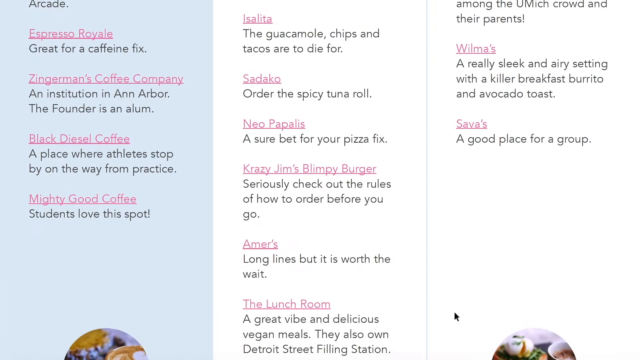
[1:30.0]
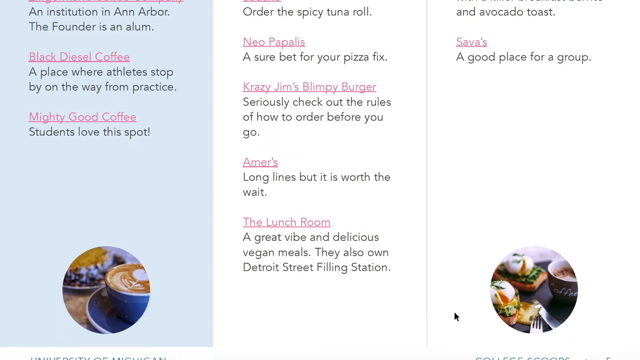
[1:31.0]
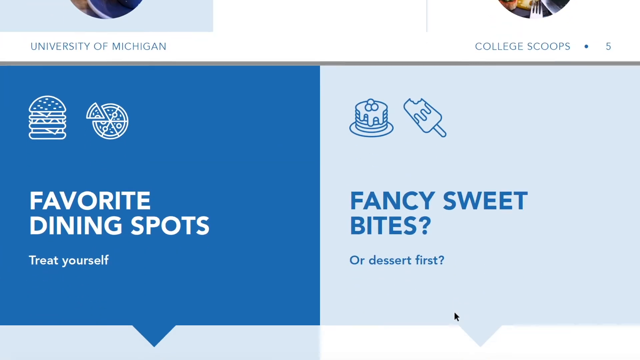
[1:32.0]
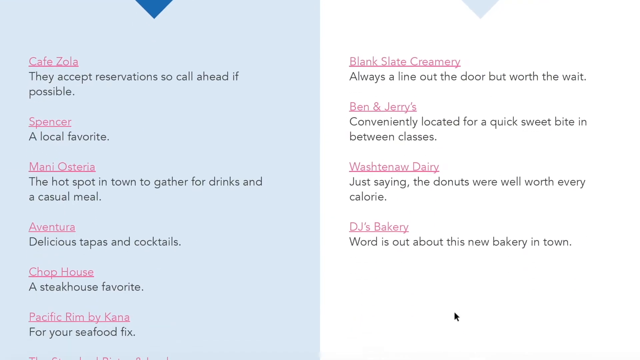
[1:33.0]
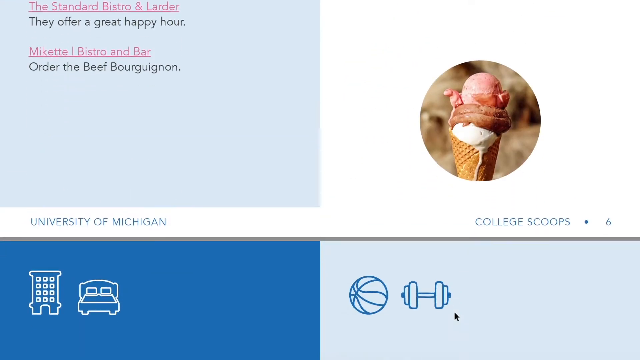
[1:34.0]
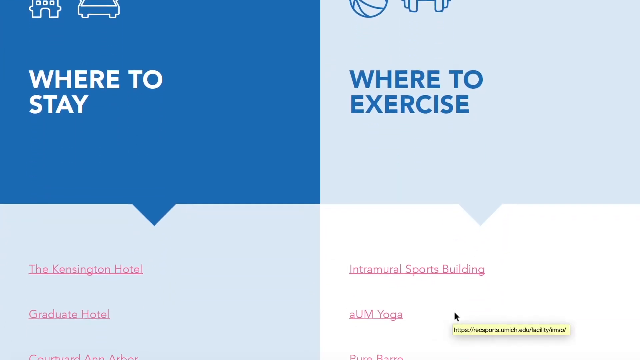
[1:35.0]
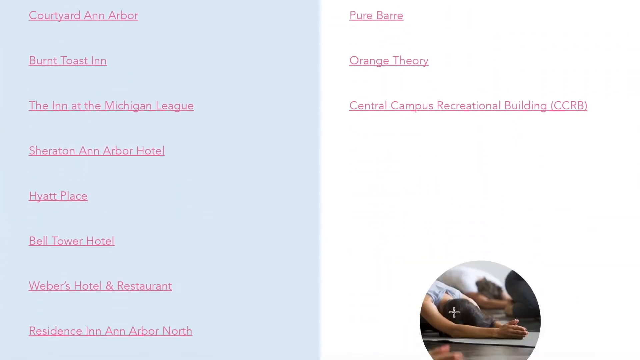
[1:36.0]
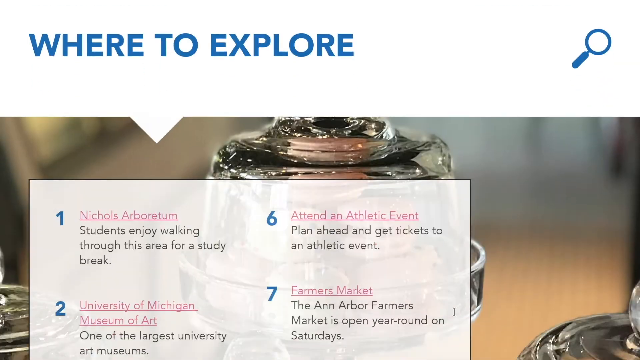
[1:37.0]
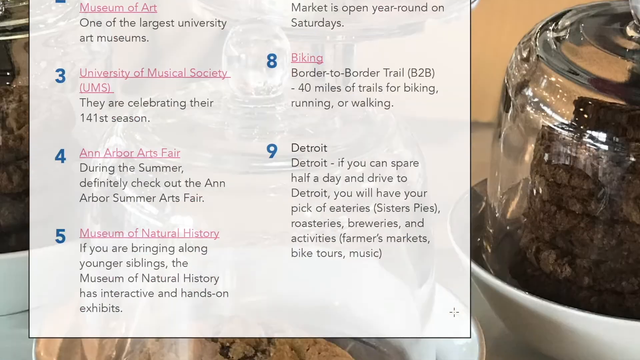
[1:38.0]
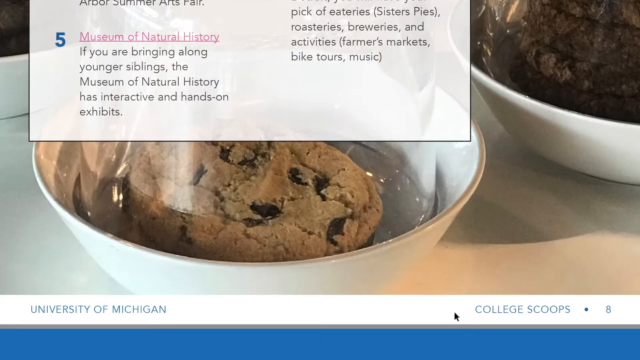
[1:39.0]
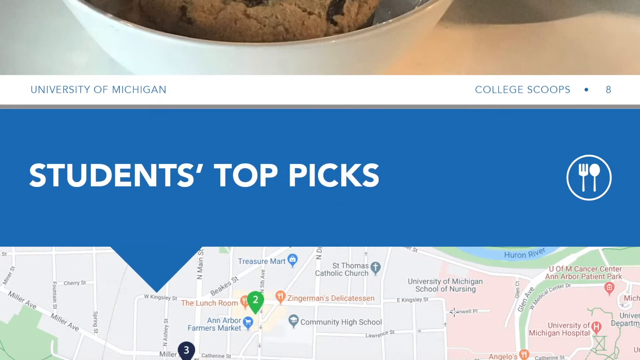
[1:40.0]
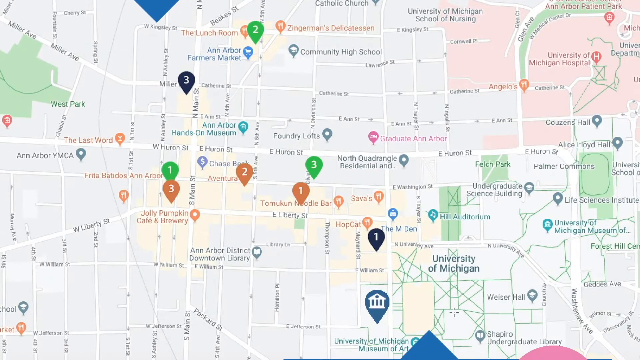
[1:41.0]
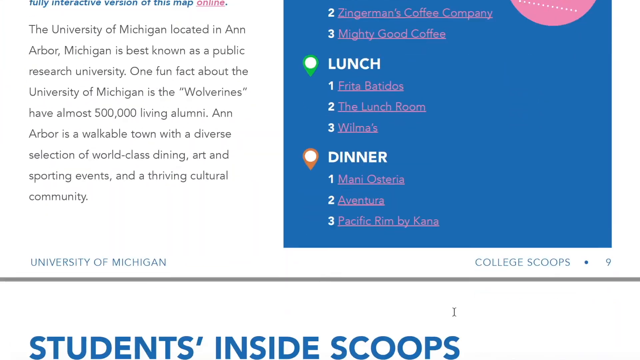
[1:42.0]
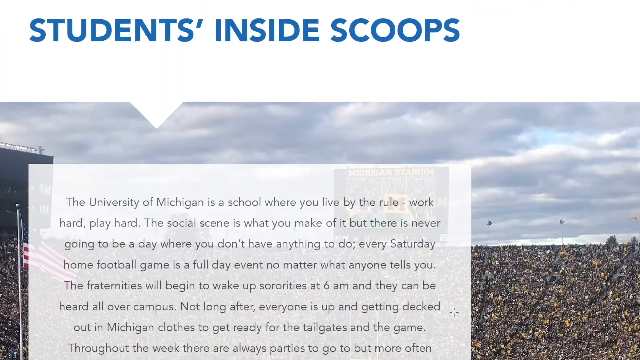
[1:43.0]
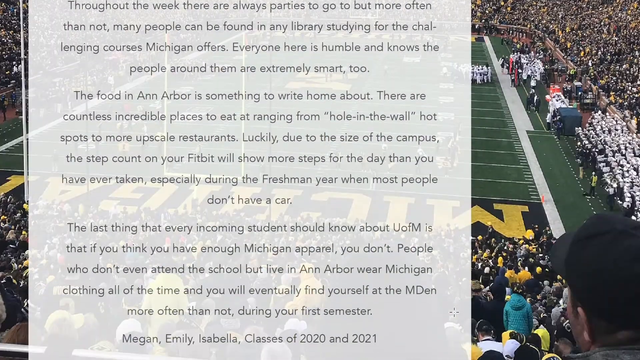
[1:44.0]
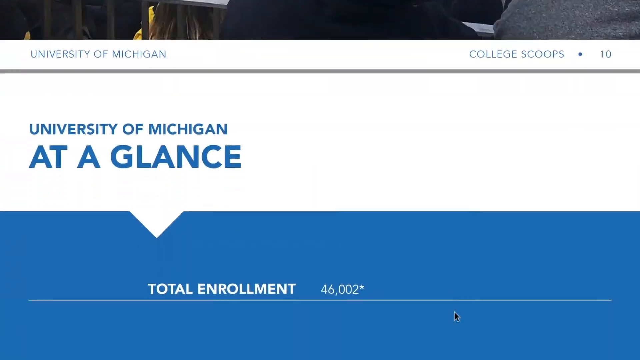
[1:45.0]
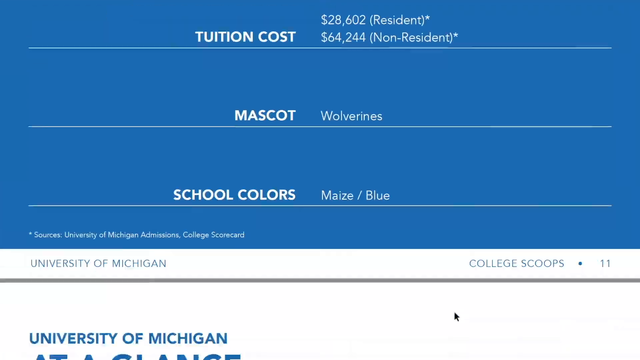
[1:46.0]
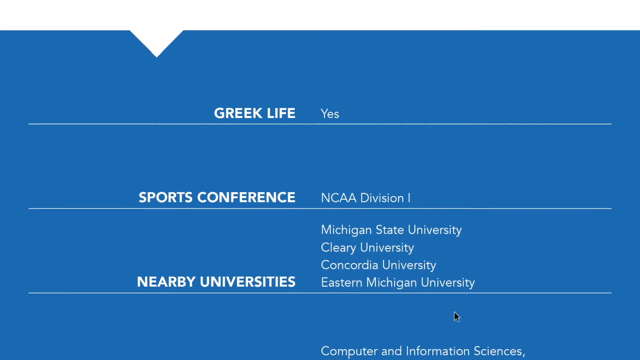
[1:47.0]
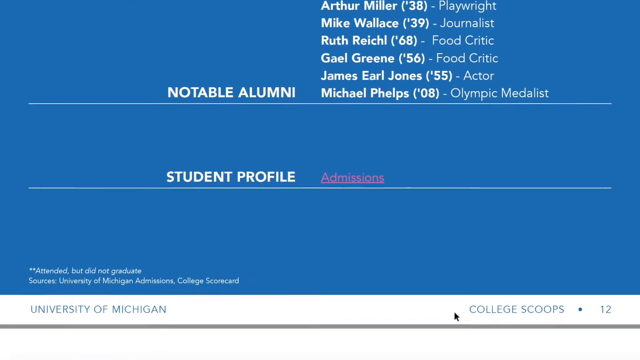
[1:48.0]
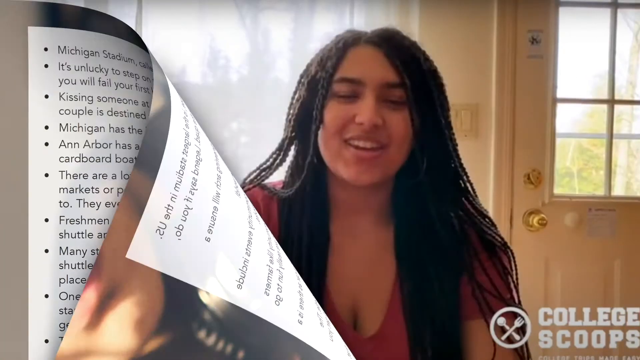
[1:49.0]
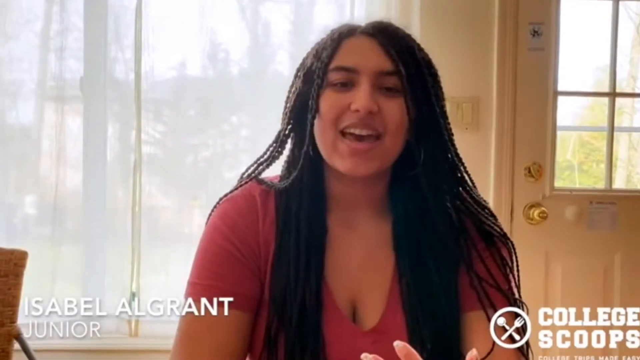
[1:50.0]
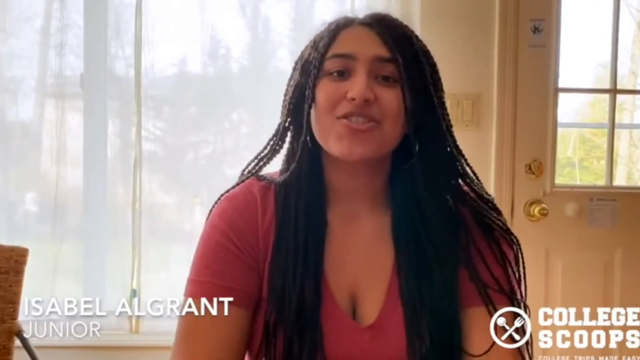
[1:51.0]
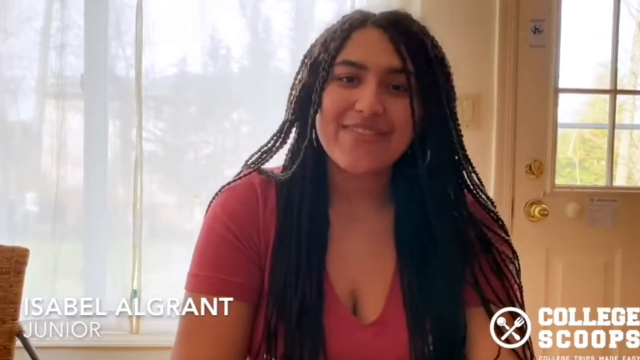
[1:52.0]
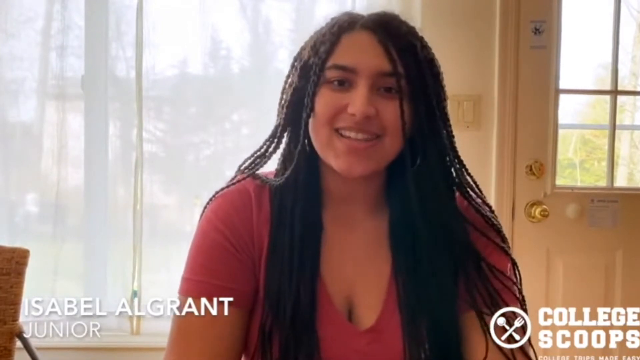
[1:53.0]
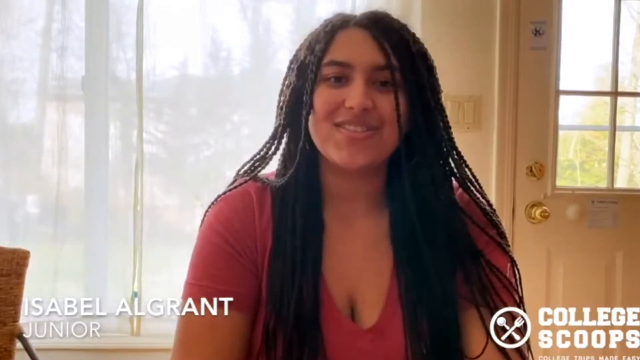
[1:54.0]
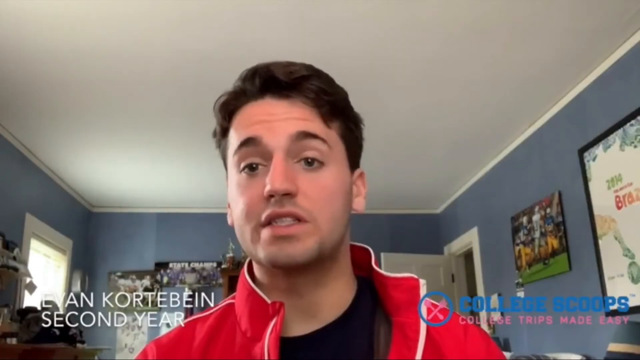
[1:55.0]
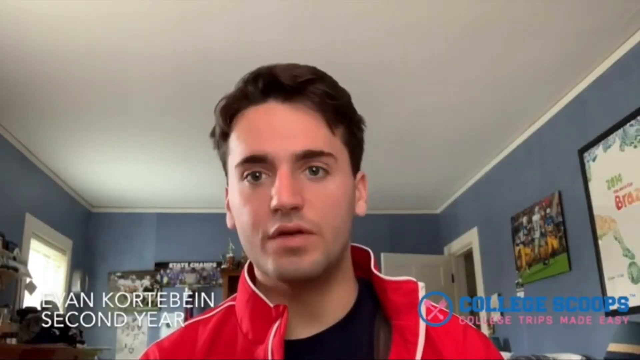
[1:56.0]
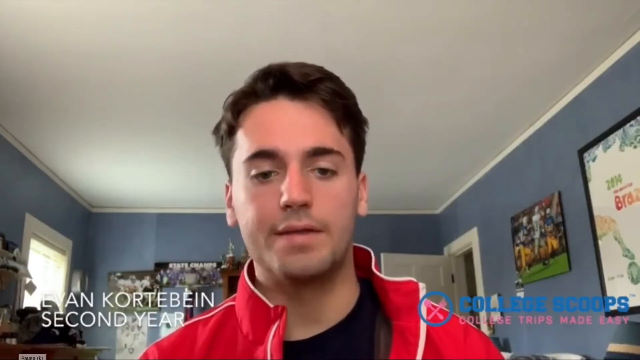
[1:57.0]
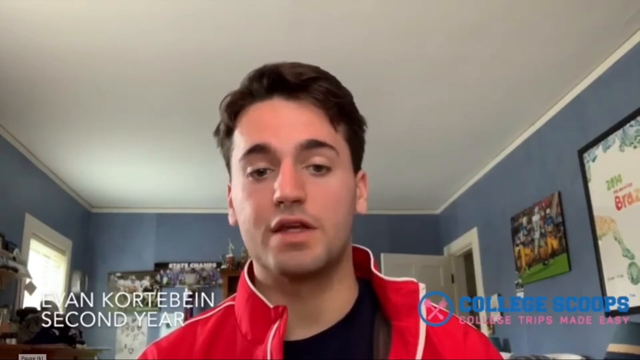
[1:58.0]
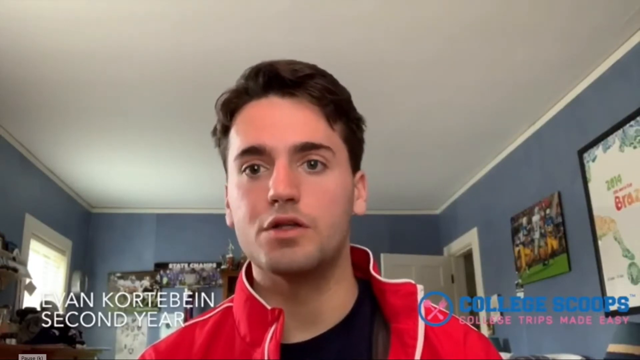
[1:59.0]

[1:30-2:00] The big e-book continues to be scrolled down. On the left it says "favorite dining spots," with "treat yourself" right below it, and on the right is text along the lines of "fancy sweet bites" or "dessert first"; it almost looks like a menu. Afterwards, people are shown being interviewed, probably as testimonials from students who have used the service. The first is a girl named Isabelle Algrant, a junior, who has long black dreaded hair and wears a red dress. Next comes a guy named Lyon, a second year.